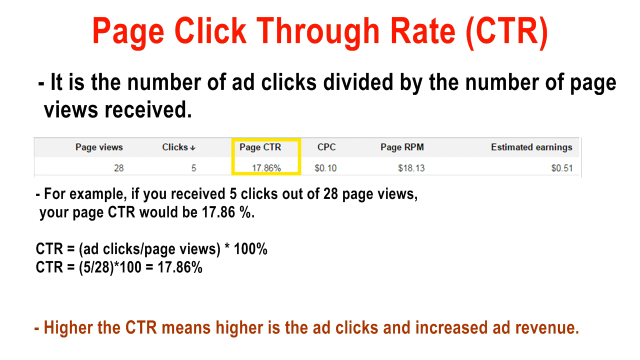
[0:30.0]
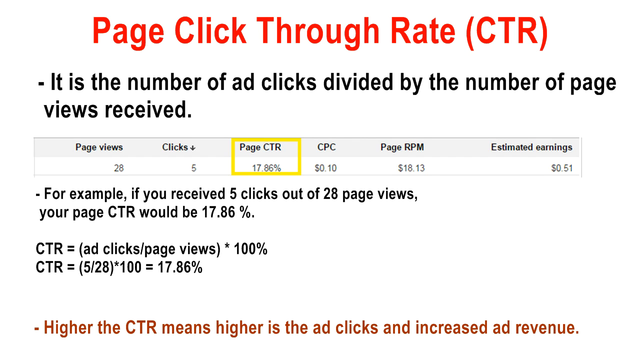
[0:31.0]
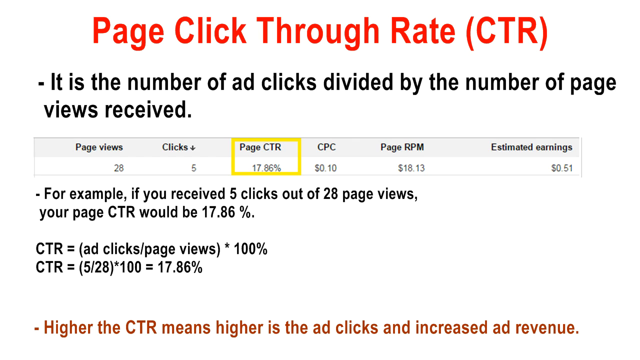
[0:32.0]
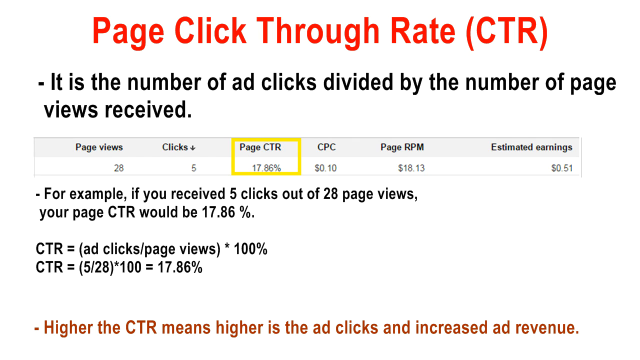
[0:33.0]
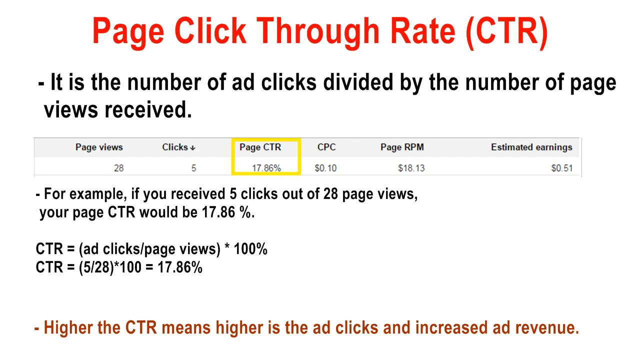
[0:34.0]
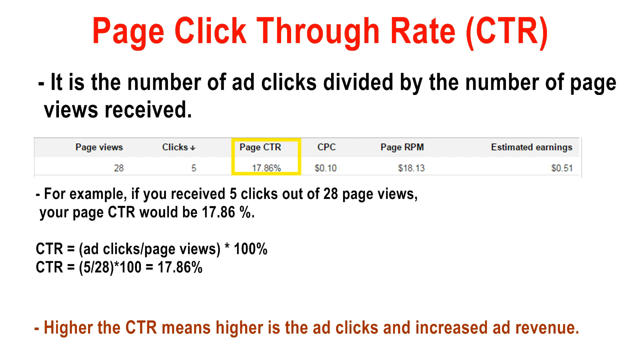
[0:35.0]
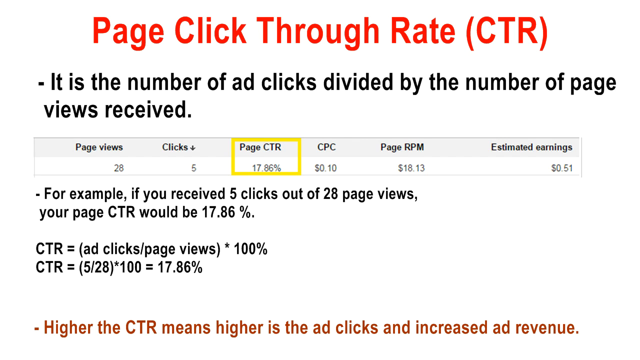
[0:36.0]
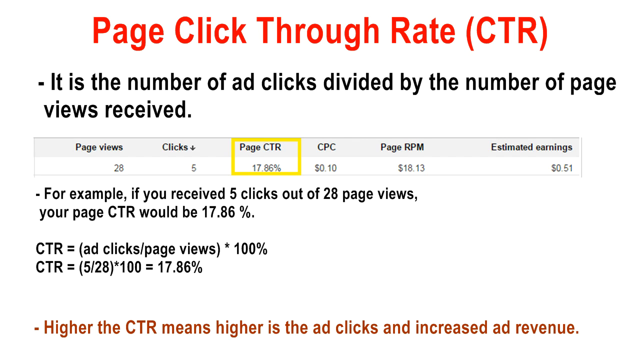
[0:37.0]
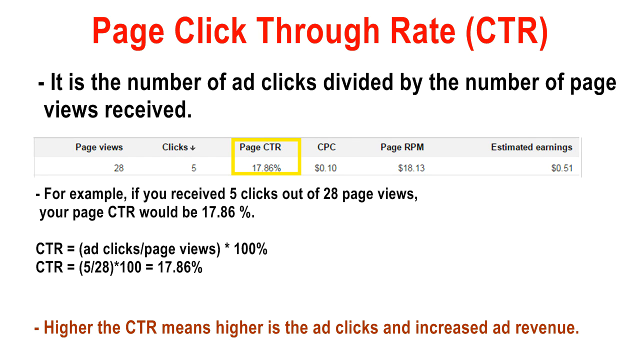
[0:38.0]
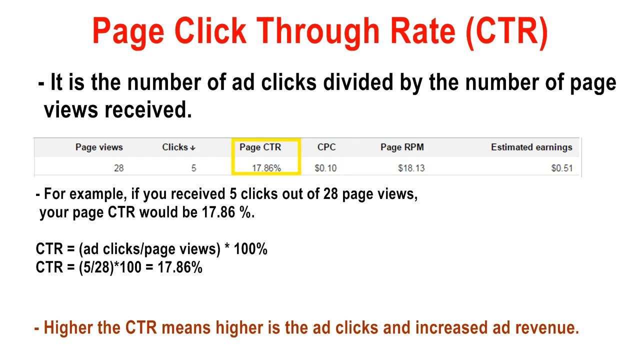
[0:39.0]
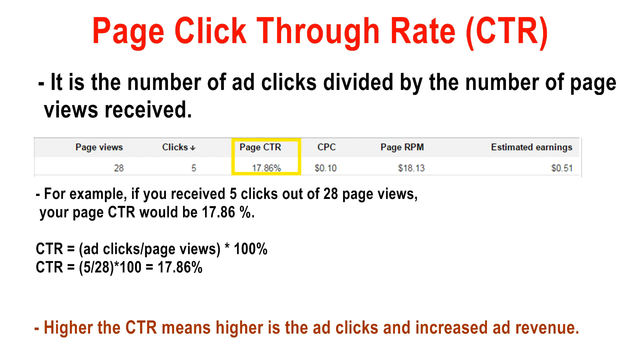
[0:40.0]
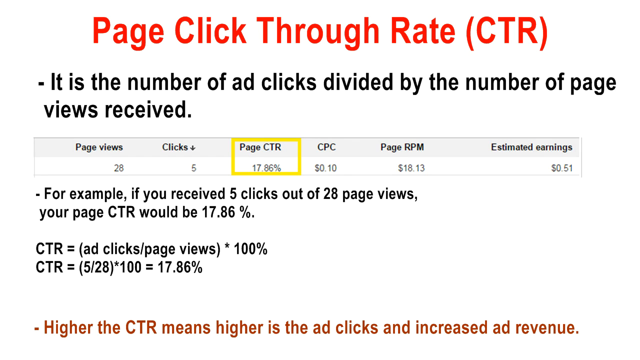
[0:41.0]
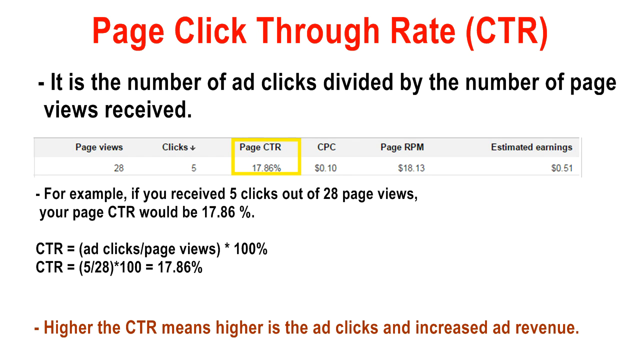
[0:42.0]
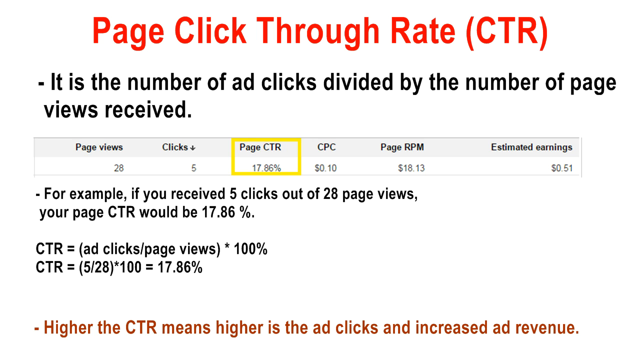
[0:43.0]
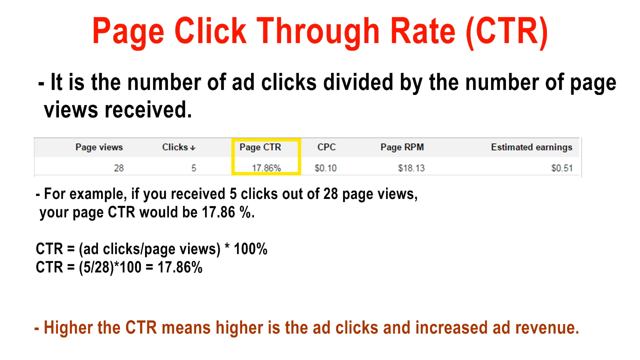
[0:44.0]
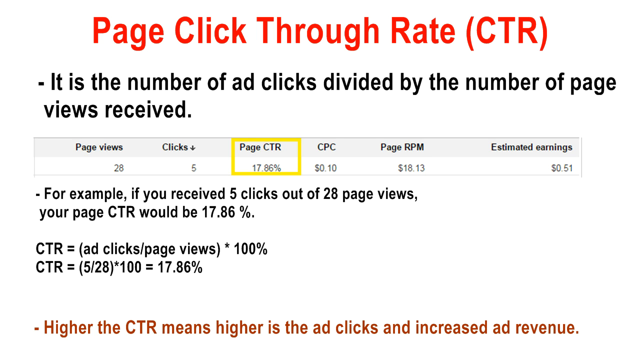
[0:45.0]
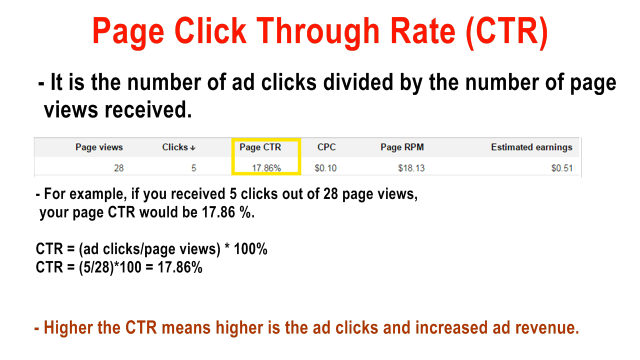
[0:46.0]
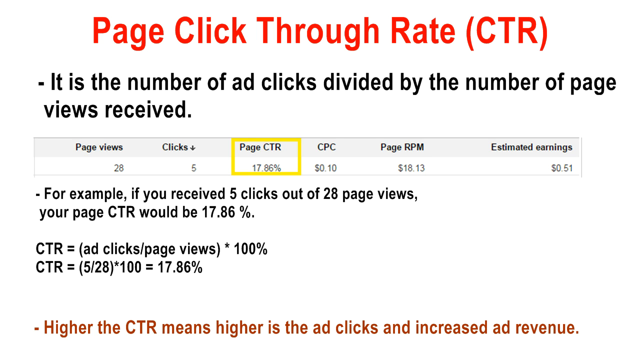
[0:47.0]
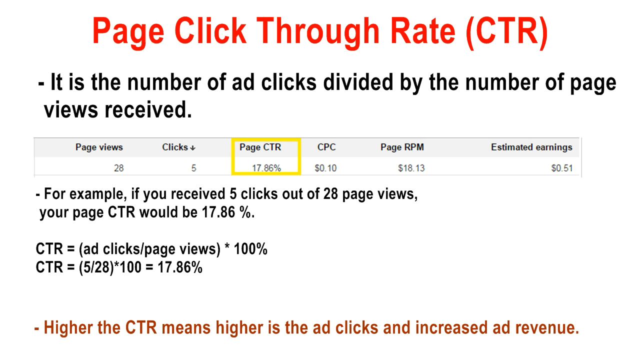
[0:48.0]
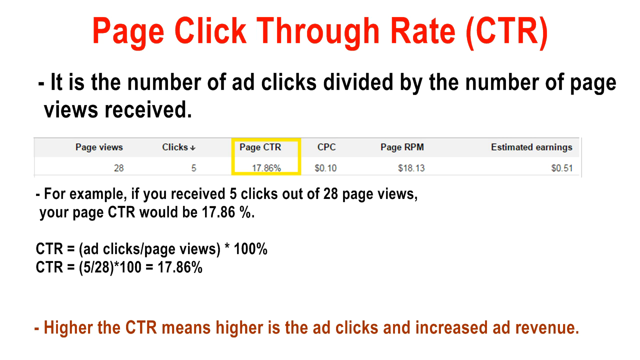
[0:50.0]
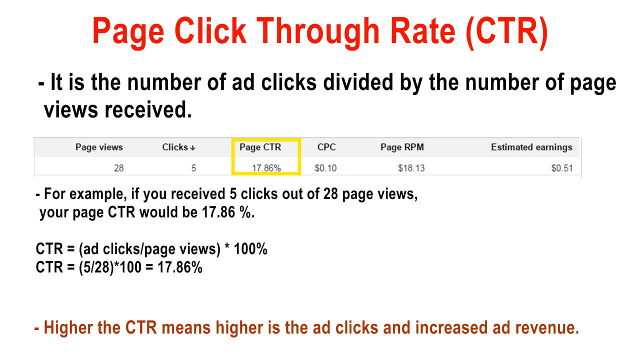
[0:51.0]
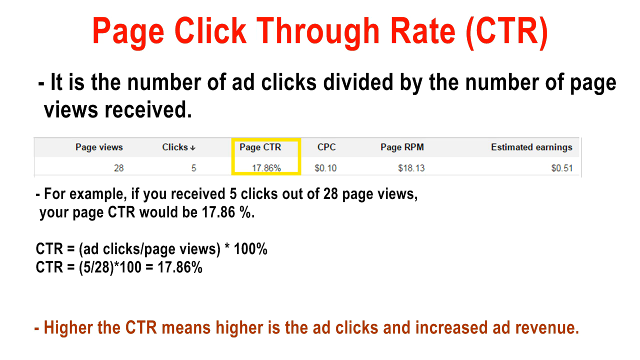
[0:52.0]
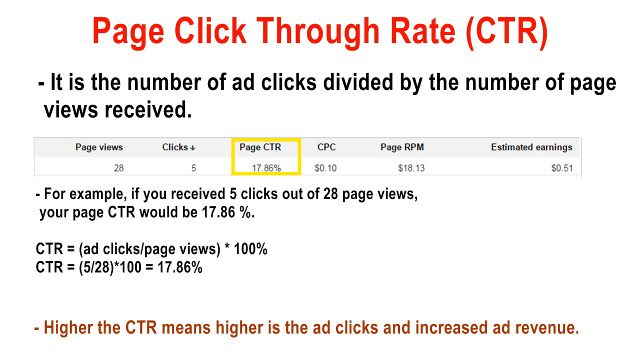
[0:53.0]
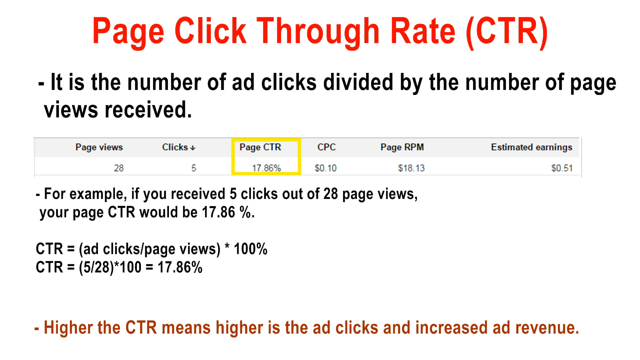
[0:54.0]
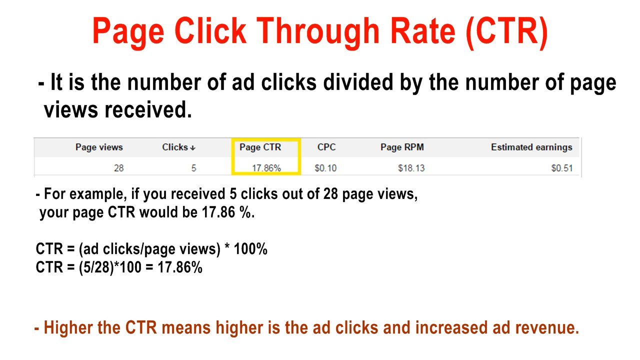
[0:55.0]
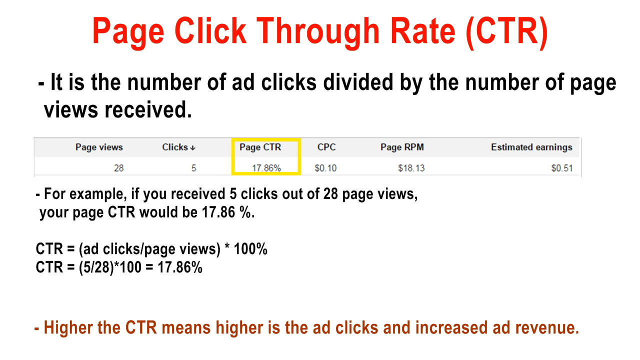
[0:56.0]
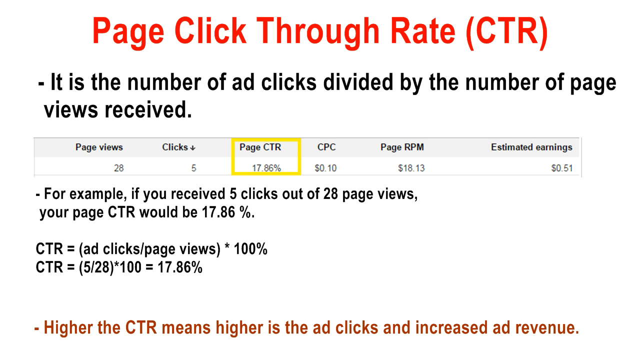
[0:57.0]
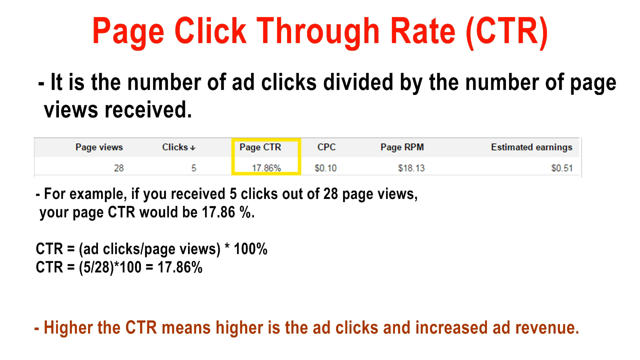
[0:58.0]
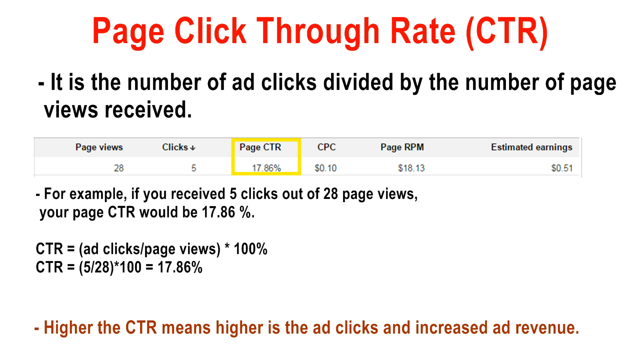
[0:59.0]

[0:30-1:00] The page click-through rate (CTR) screen, headed in red lettering, remains on screen. It also gives the estimated earnings a person would have with a CTR of 17.86%, and states that a higher CTR means higher ad clicks and increased ad revenue. The example shows earnings of 51 cents with a CTR of 17.86%. The video stays on this screen and does not return to the man. The page has a white background, and a yellow box surrounds the page CTR.